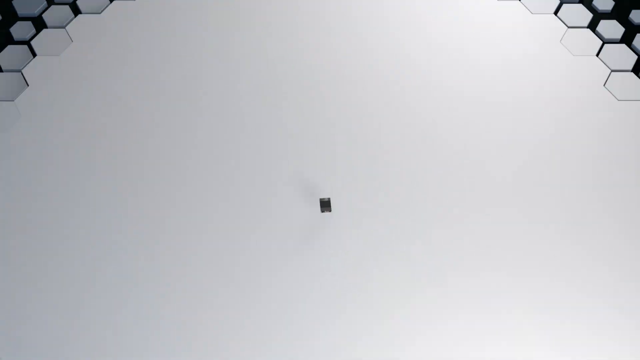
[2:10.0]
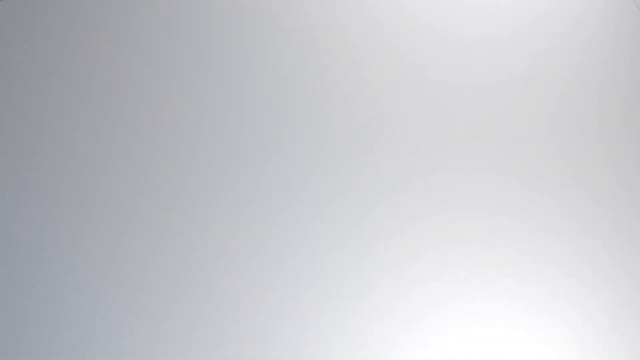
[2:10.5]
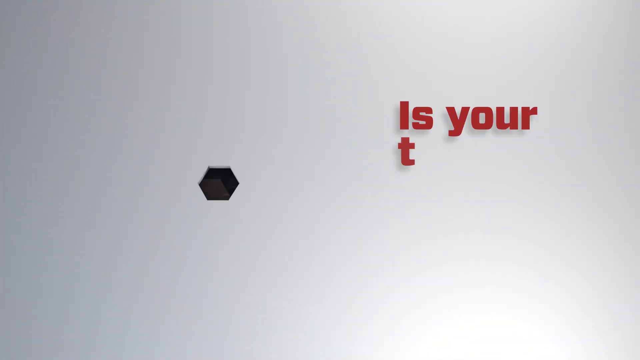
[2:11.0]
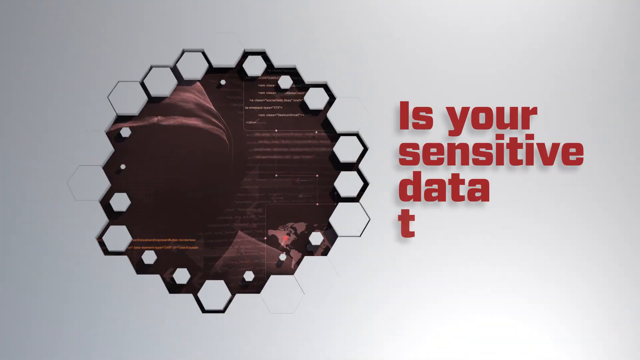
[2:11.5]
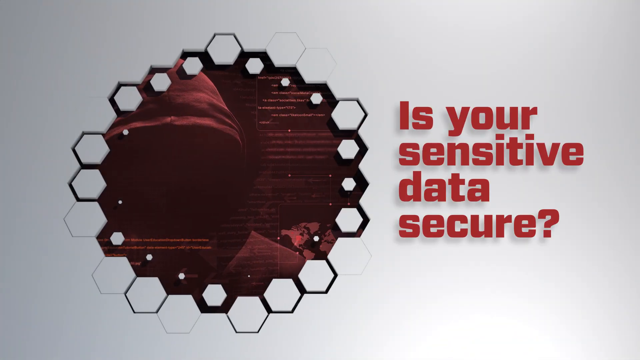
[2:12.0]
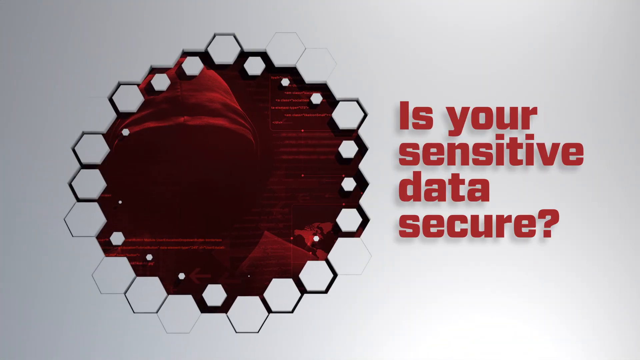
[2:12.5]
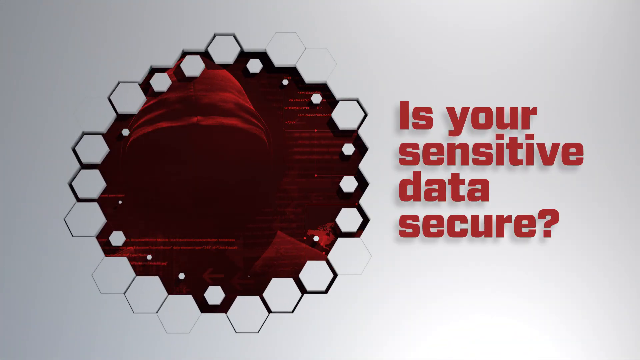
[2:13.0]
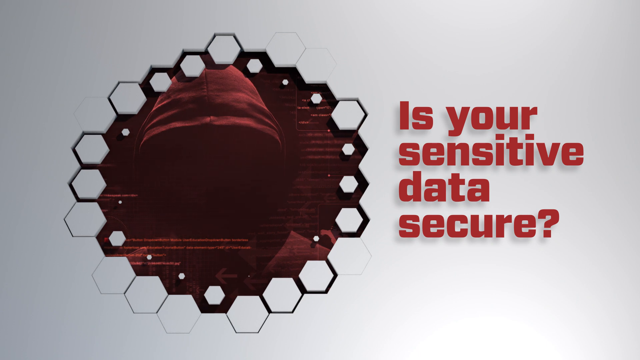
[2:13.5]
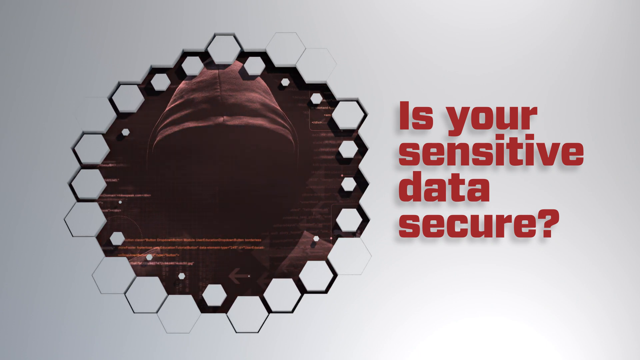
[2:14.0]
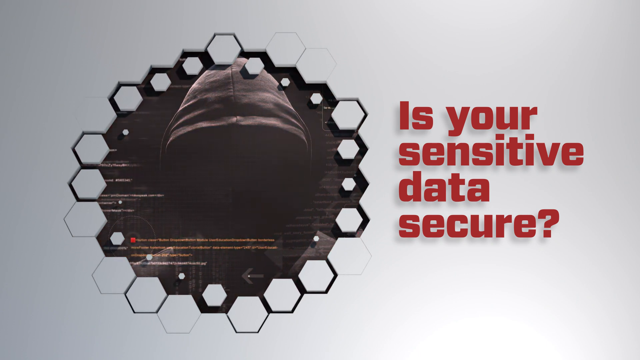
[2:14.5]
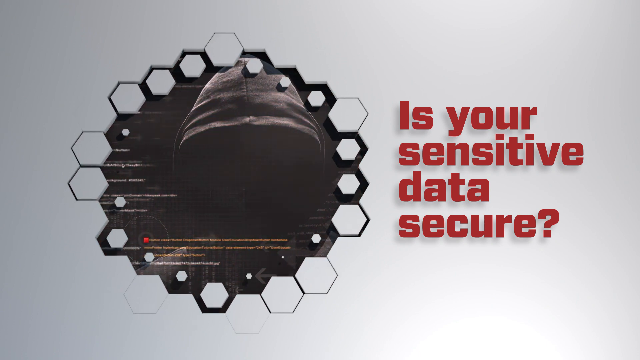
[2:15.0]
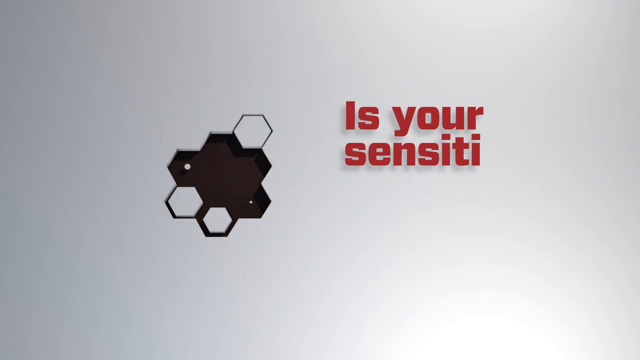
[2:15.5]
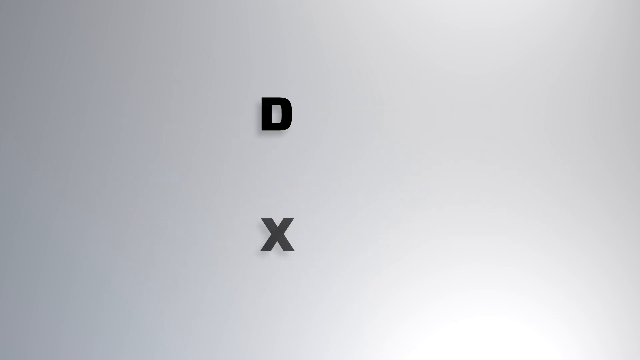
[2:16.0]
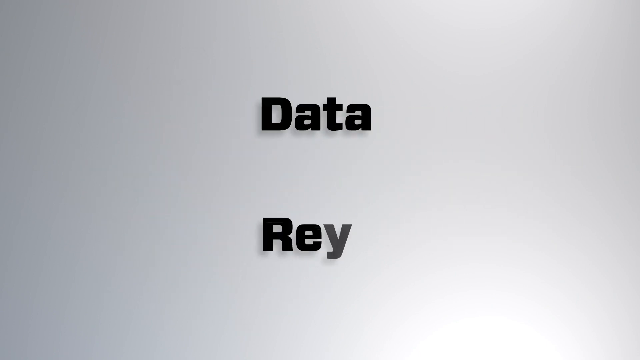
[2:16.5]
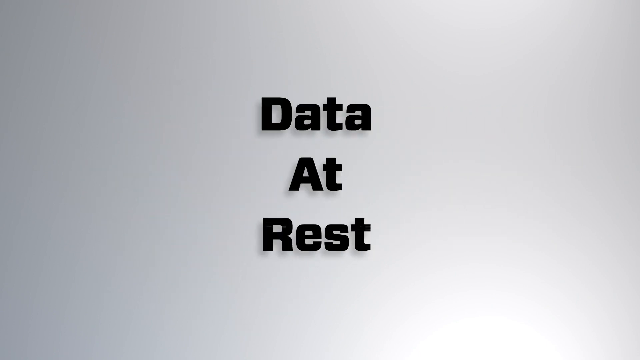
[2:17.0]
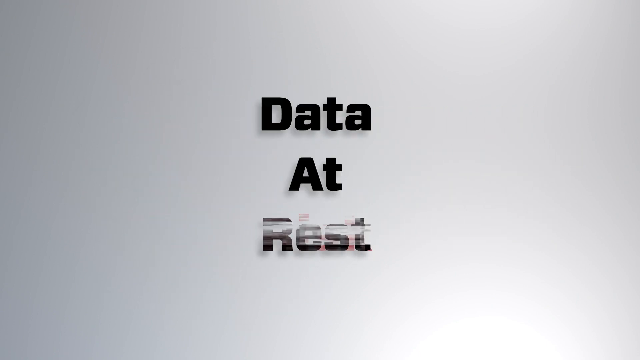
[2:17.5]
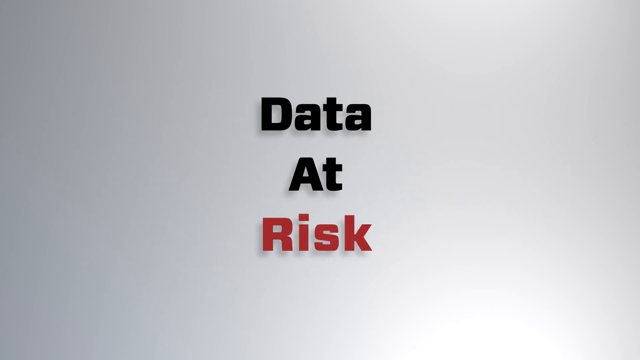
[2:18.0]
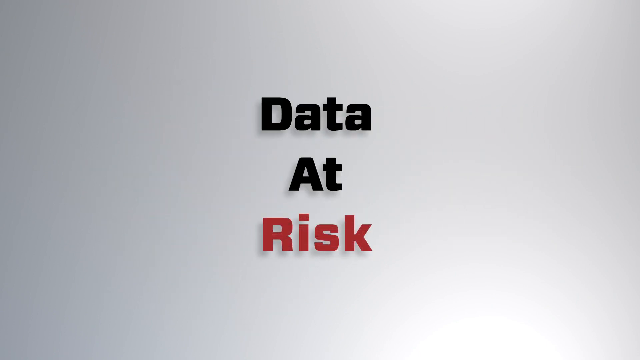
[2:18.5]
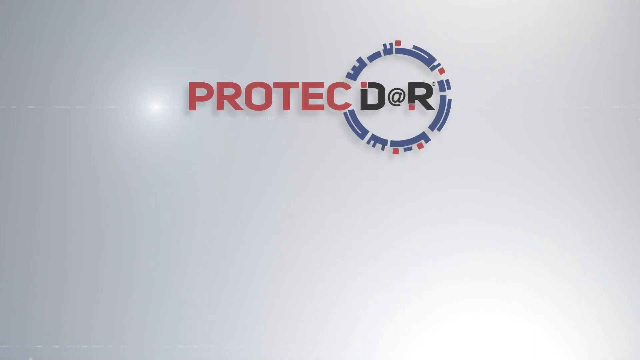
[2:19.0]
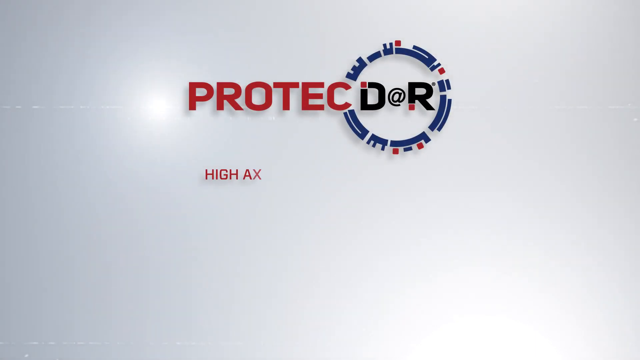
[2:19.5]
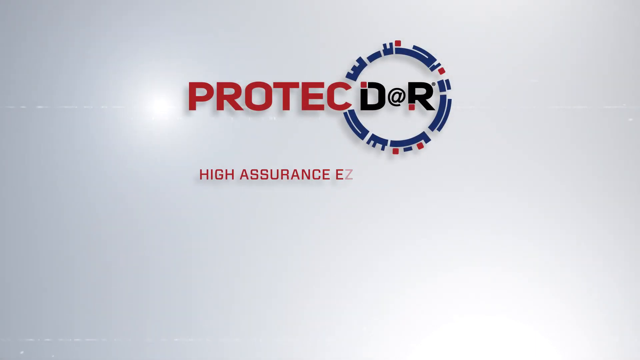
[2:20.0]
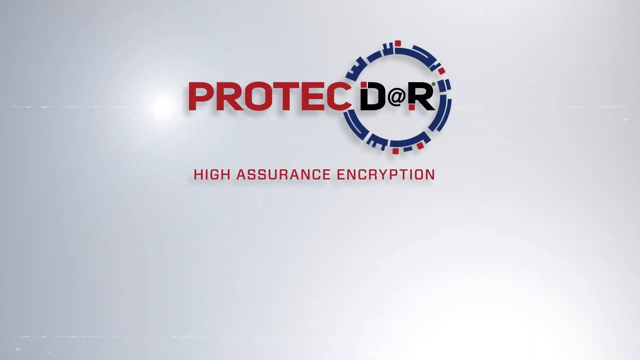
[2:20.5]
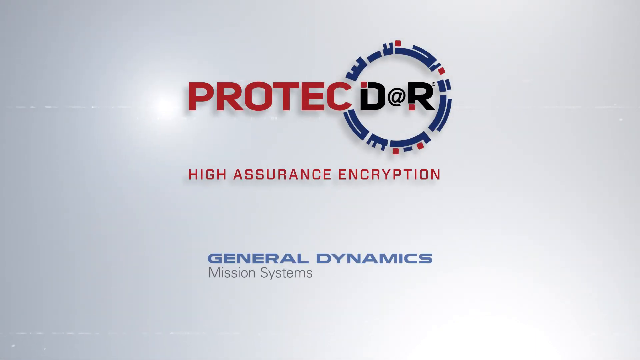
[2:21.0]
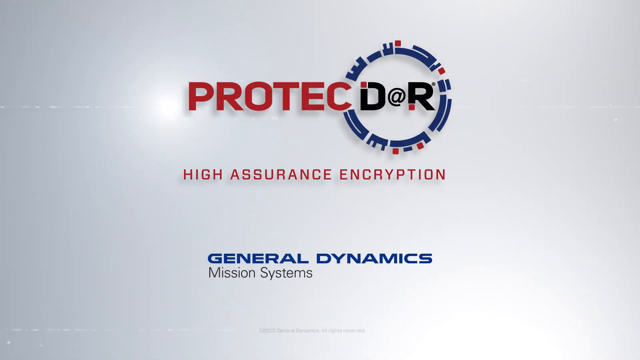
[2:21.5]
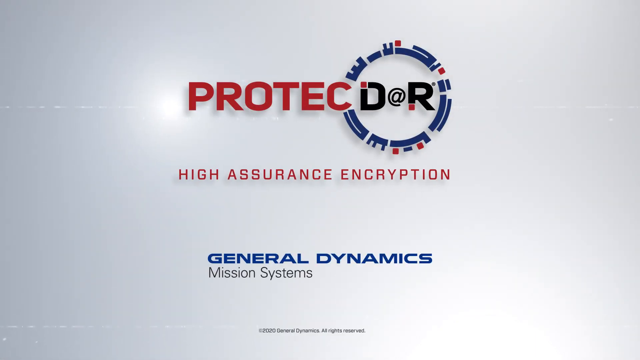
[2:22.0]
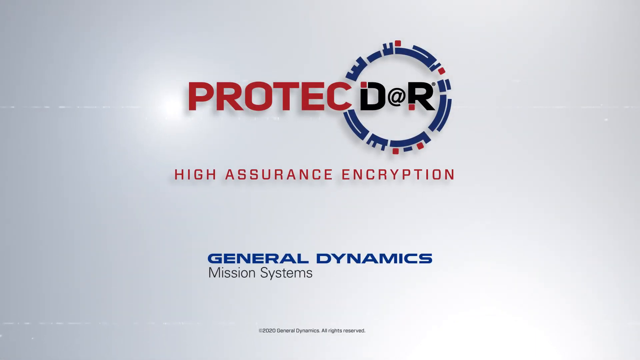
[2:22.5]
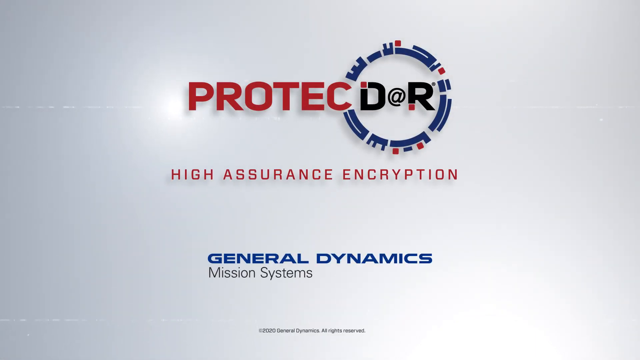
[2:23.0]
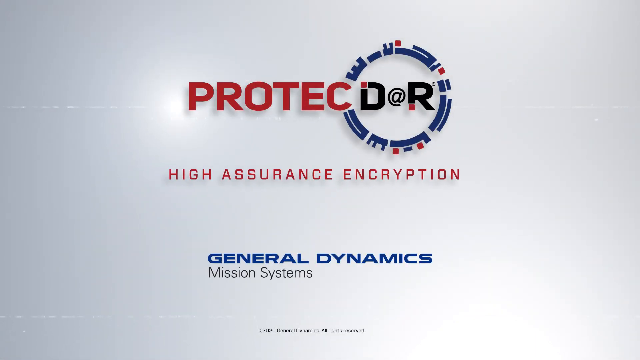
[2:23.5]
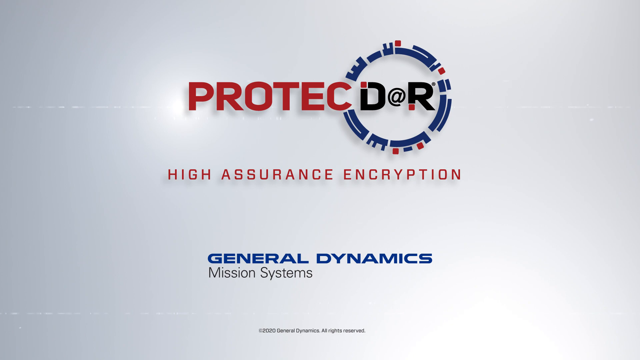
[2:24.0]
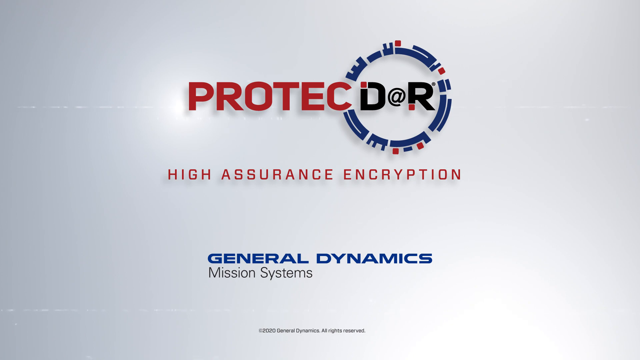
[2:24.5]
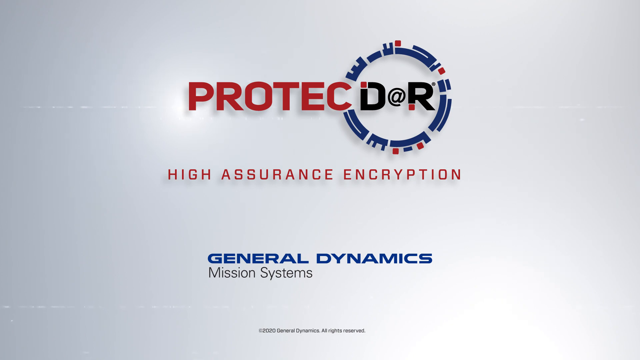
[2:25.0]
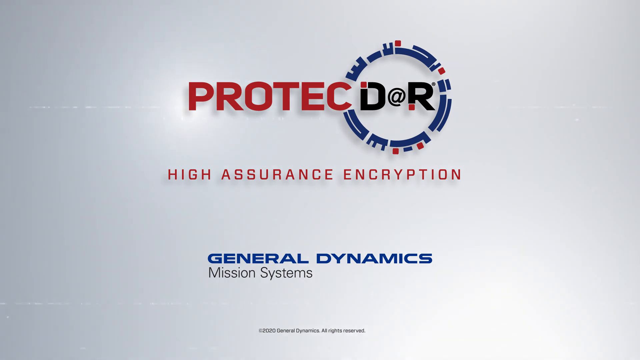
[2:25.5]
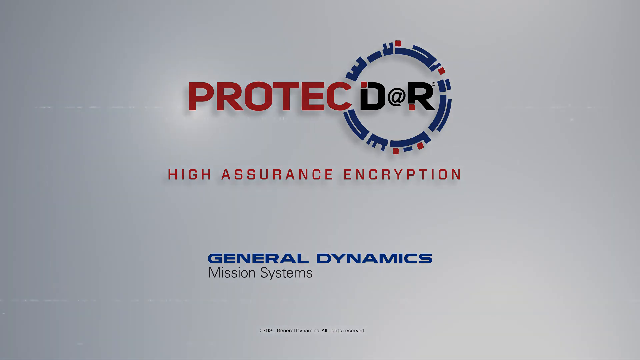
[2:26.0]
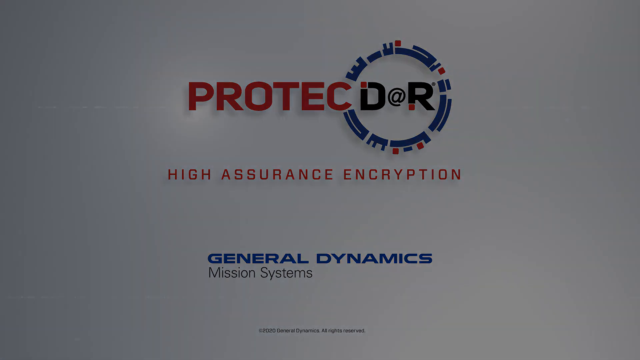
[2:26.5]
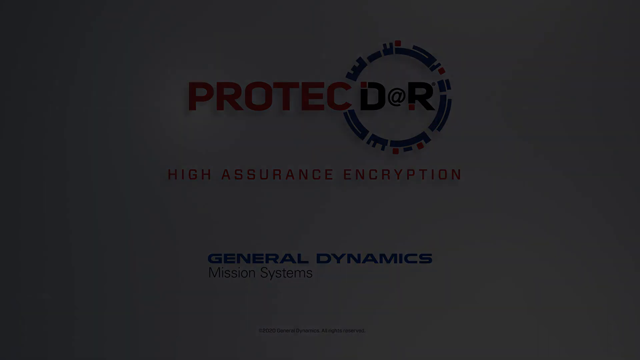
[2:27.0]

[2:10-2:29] The same sort of red hooded figure in a circle of hexagons from the beginning of the video appears, with text to the right reading "is your sensitive data secure?" The picture then looks to become a bit grayer and eventually disappears. The text on the right changes to "data at rest," and then "rest" changes to "risk." At the end, the Protect Door logo appears with "high assurance encryption" in the middle. The video looks to be some sort of ad for Protect Door.